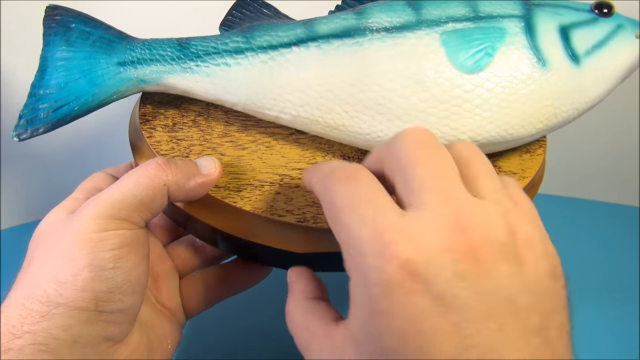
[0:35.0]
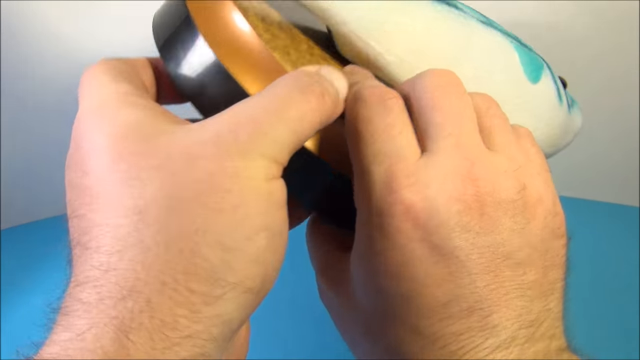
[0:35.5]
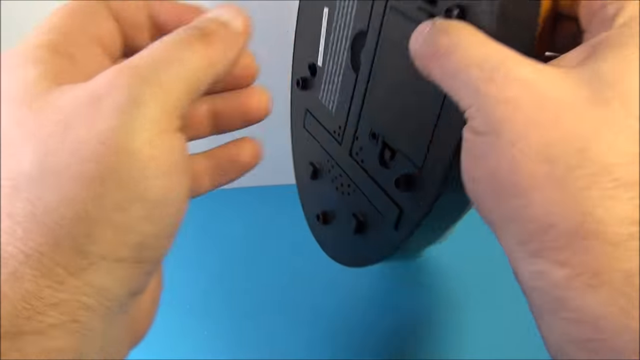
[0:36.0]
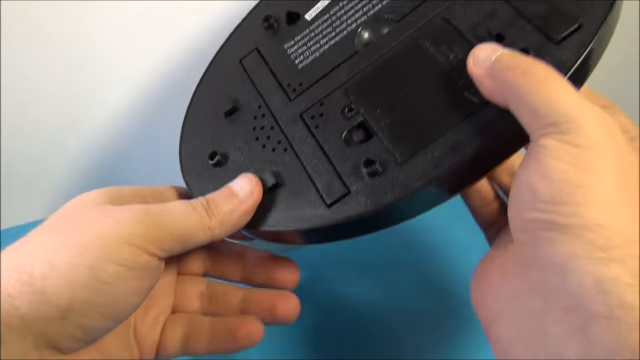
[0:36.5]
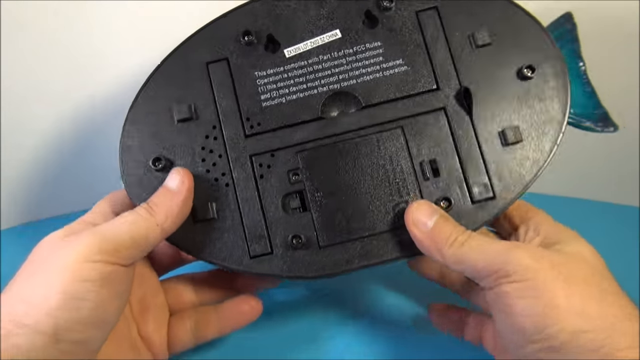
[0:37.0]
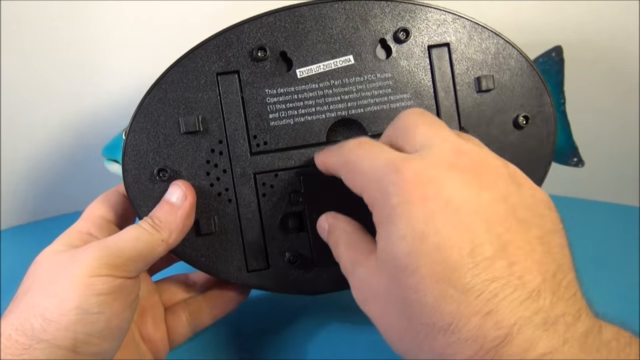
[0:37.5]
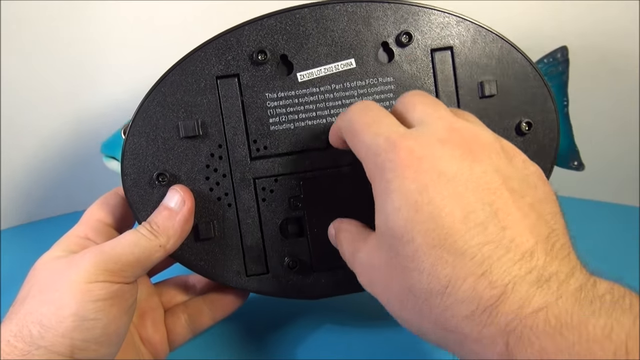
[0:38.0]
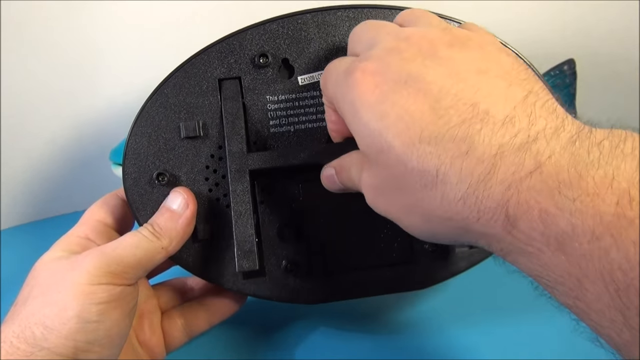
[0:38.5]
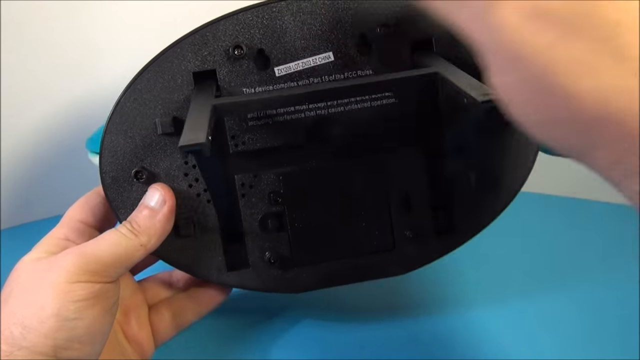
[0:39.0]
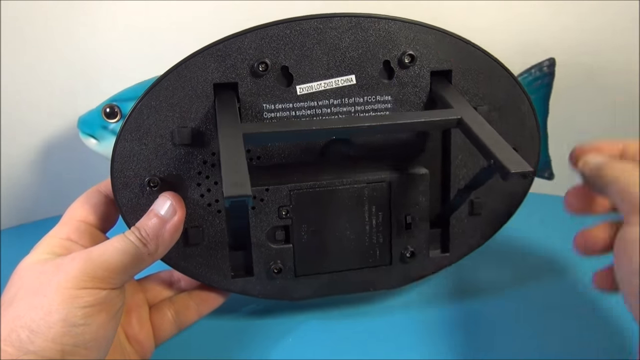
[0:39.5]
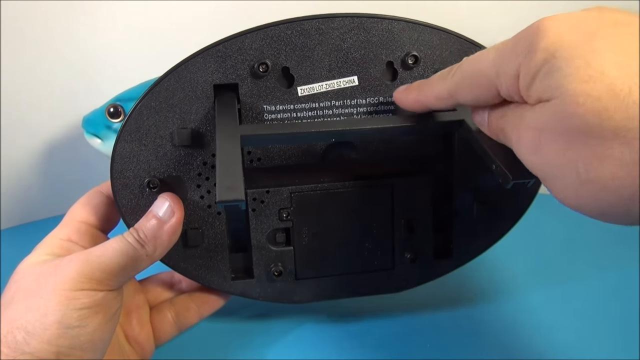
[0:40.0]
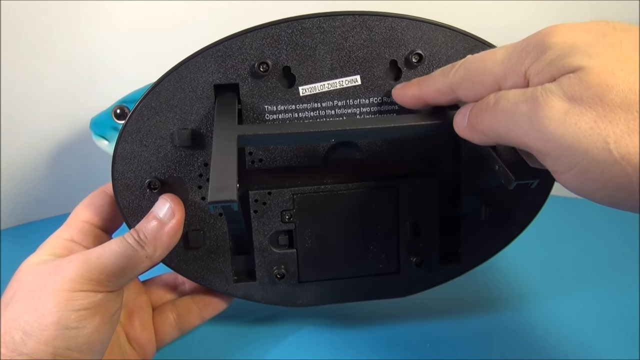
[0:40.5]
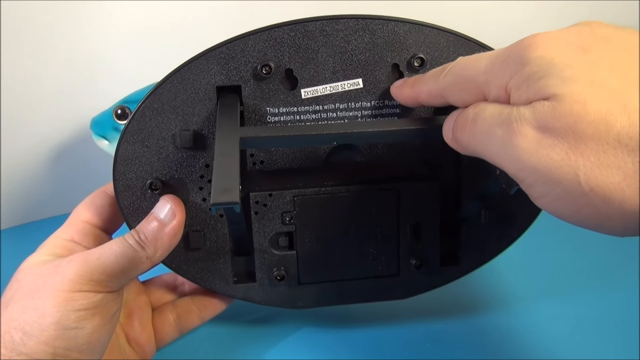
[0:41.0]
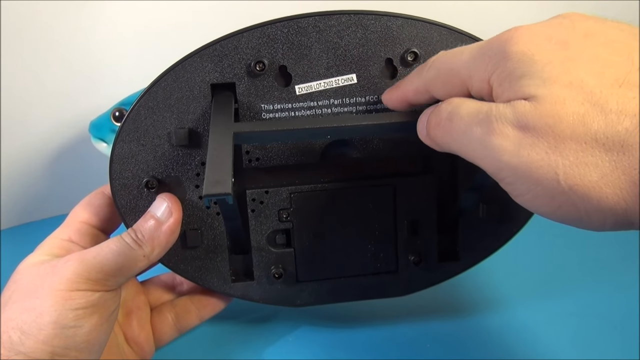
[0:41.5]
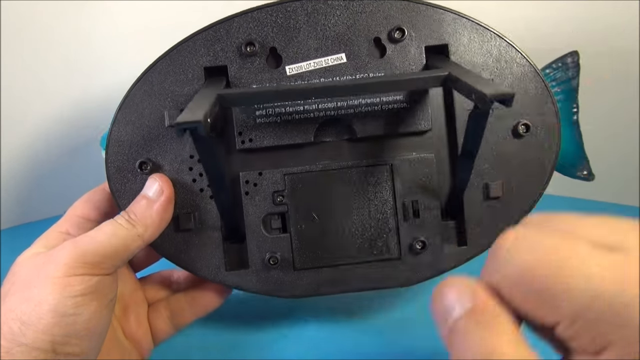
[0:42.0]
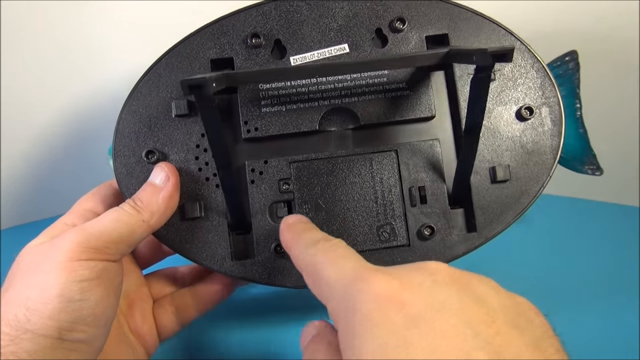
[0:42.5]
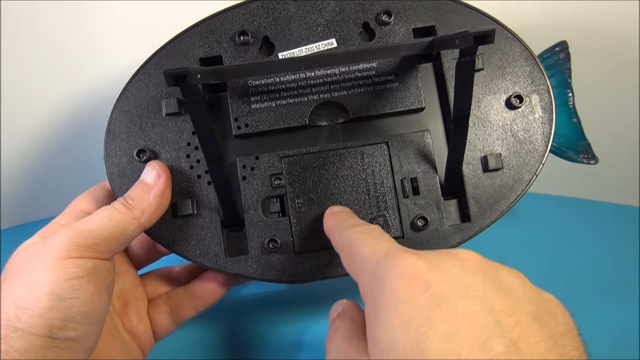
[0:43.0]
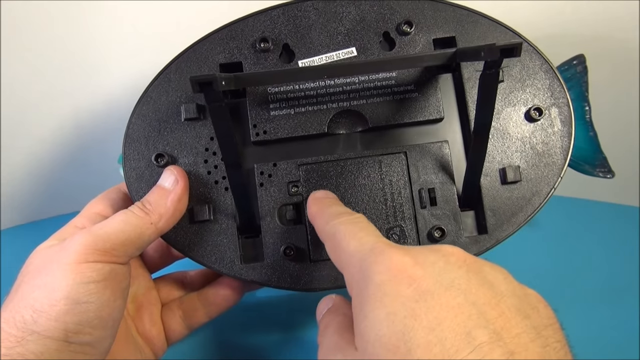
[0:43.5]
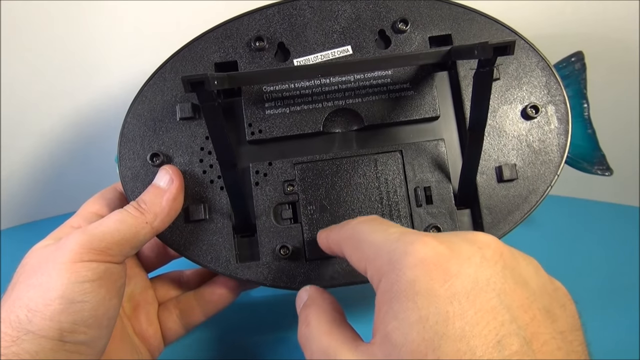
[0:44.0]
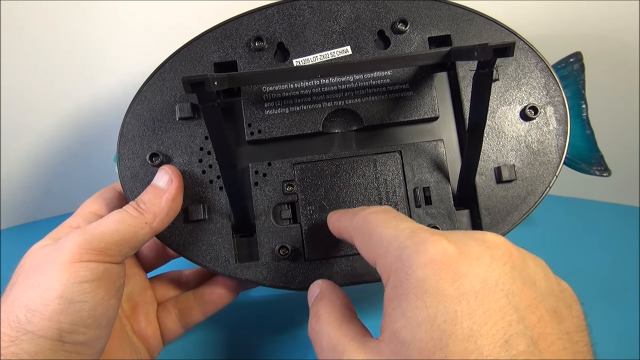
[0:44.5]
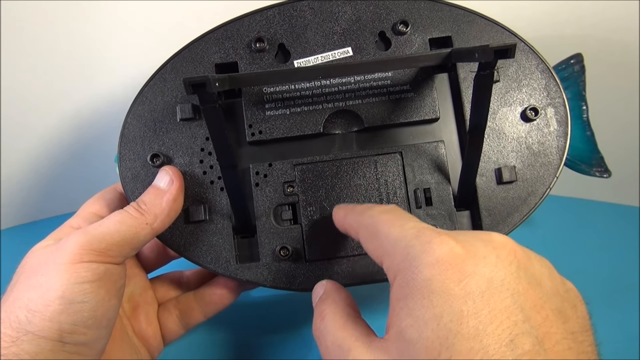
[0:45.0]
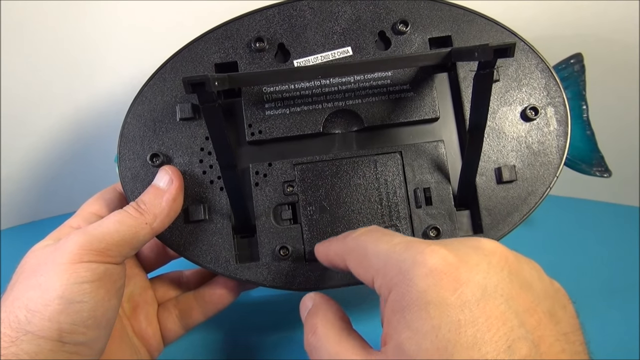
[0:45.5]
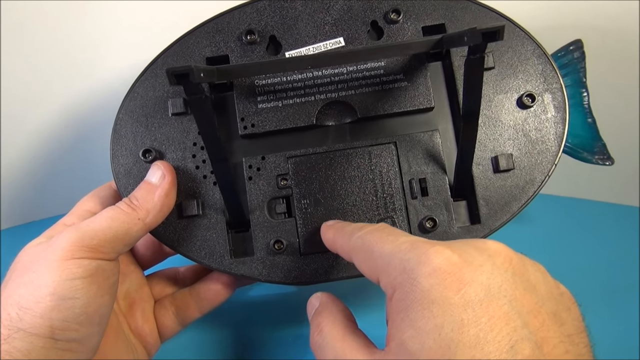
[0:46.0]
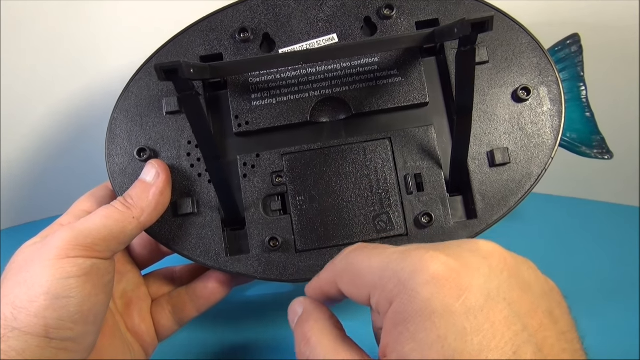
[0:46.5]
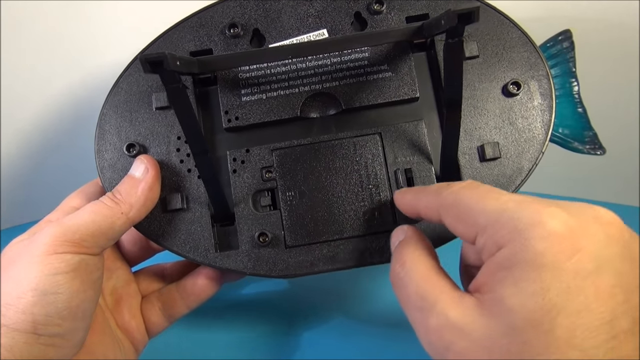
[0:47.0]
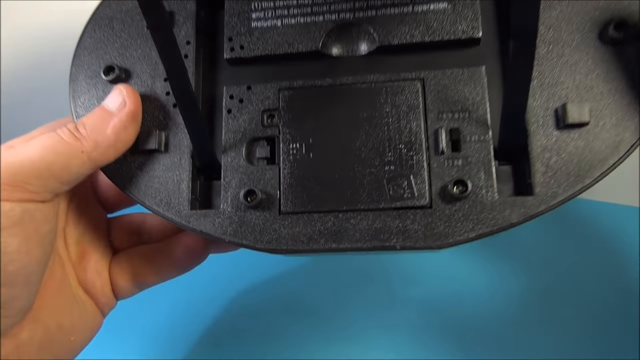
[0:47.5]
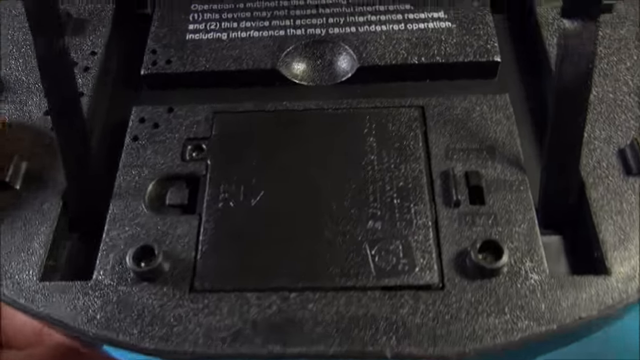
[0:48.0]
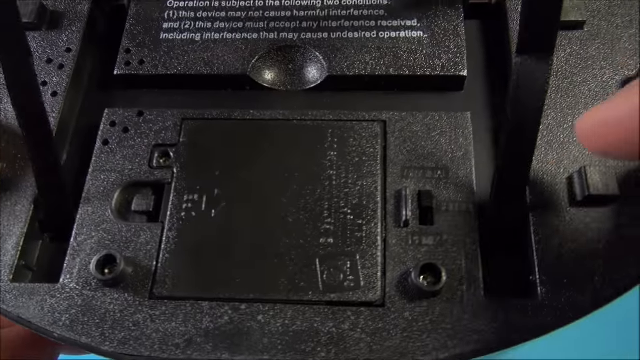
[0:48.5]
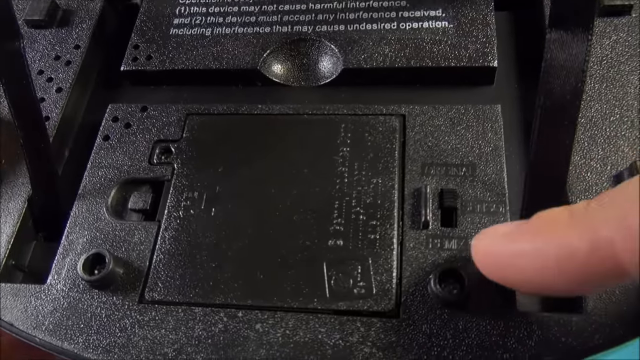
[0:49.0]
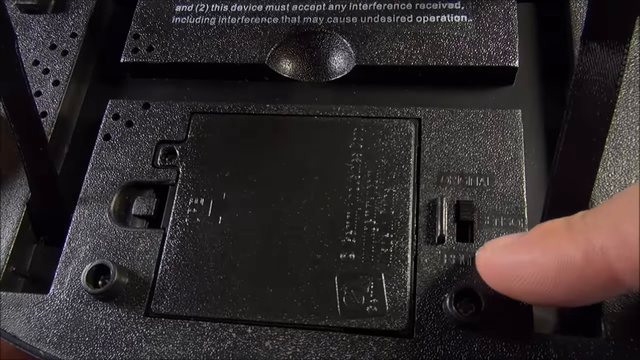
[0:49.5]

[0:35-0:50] The person turns over the fish and its plastic mounting plate, showing the back of the plate. A bracket has flipped up, and the person points out some wording on the back, the battery compartment toward the bottom of the plate, and on/off switches. The bracket allows the fish and its mounting plate to stand upright. On the left-hand side of the back are the little holes for the speaker, and the battery compartment has a screw. The small print of the warning or instructions on the back cannot be read; it looks to be more of a warning. The fish and its mounting plate look as if they are about to be set down on a blue surface, a blue table or a blue tablecloth on a table.